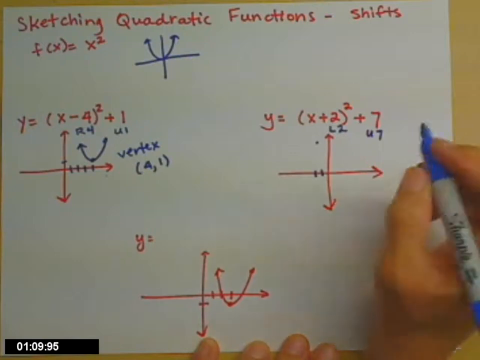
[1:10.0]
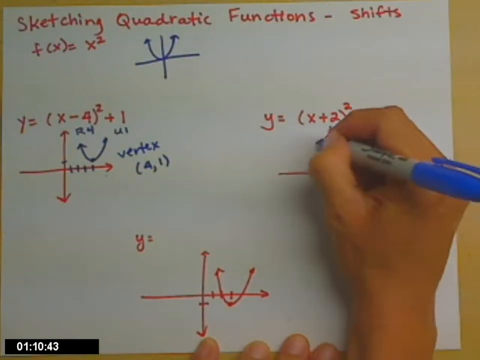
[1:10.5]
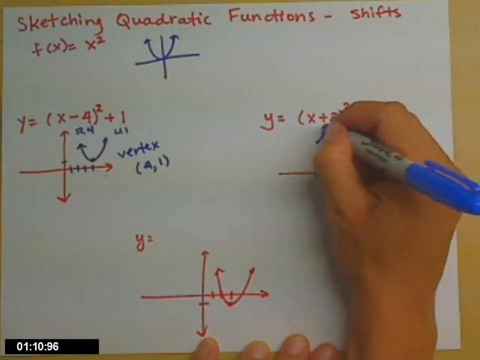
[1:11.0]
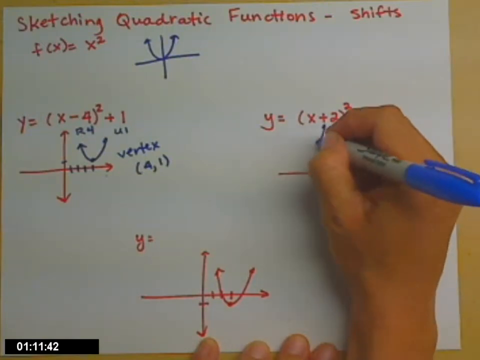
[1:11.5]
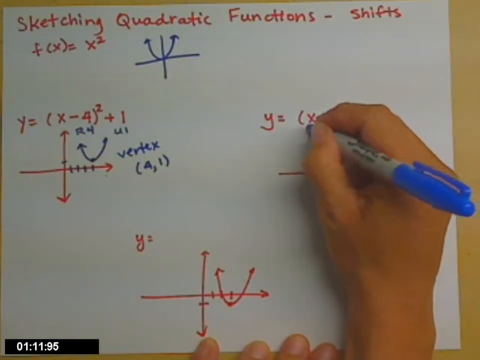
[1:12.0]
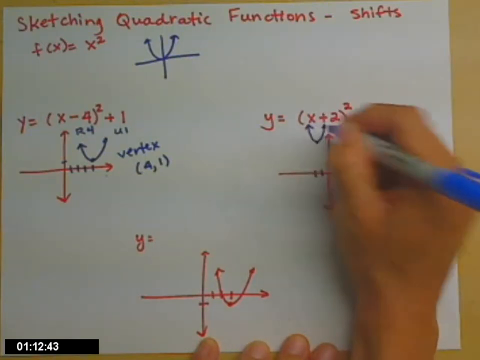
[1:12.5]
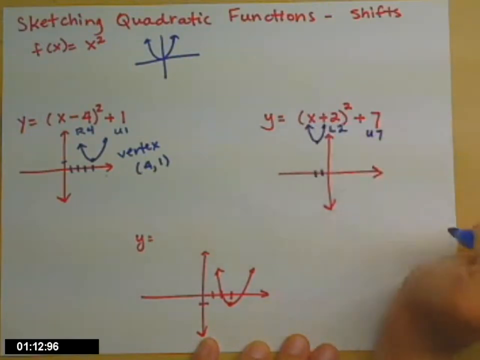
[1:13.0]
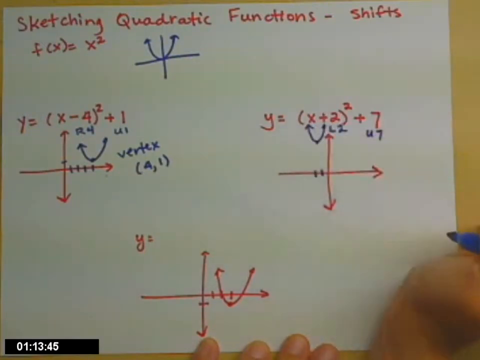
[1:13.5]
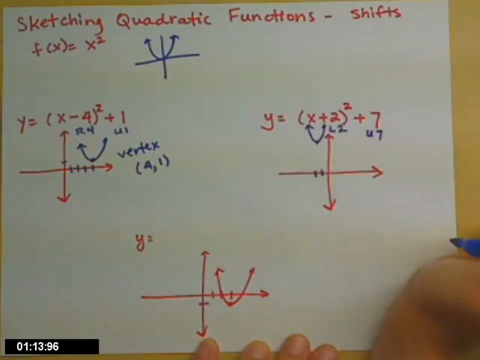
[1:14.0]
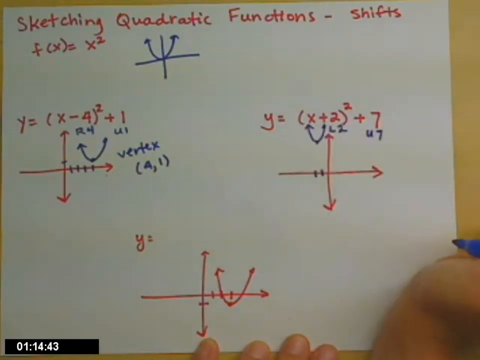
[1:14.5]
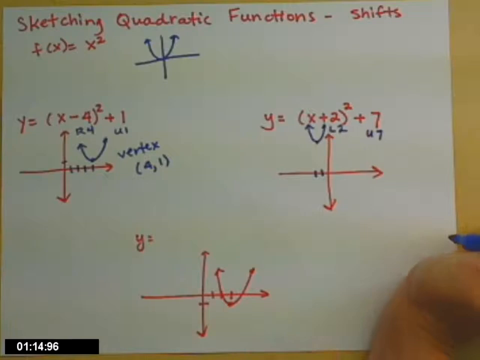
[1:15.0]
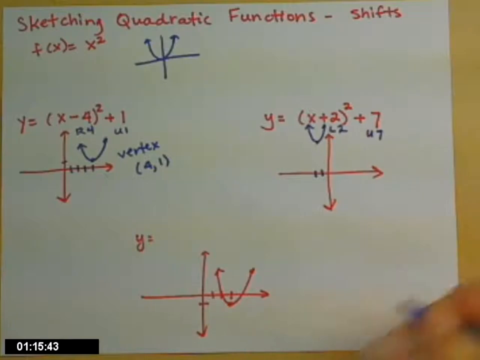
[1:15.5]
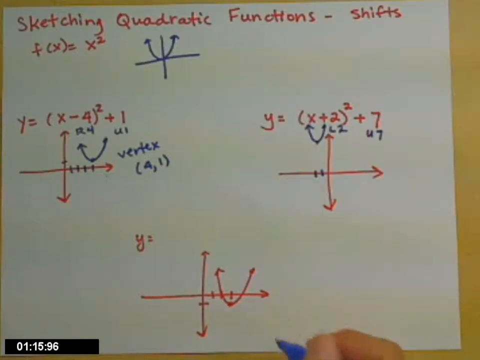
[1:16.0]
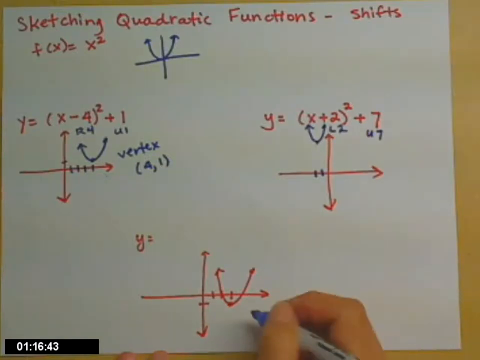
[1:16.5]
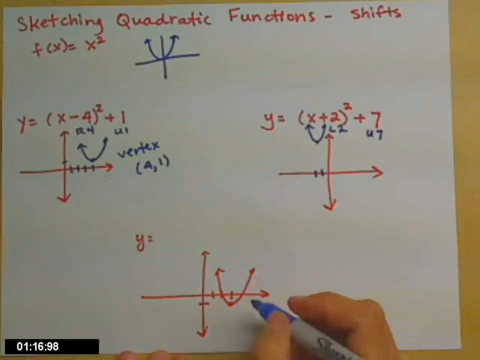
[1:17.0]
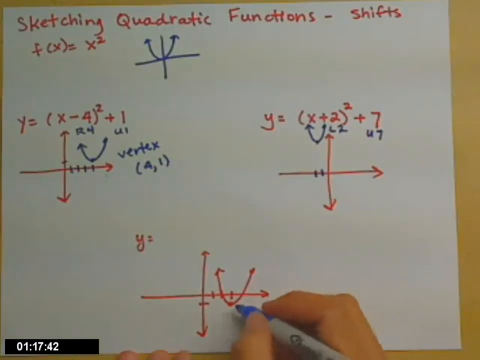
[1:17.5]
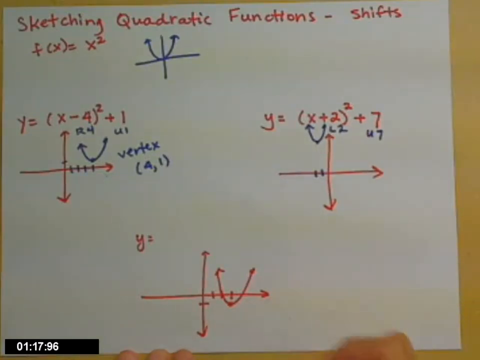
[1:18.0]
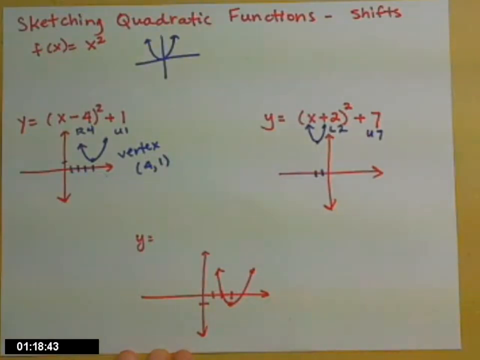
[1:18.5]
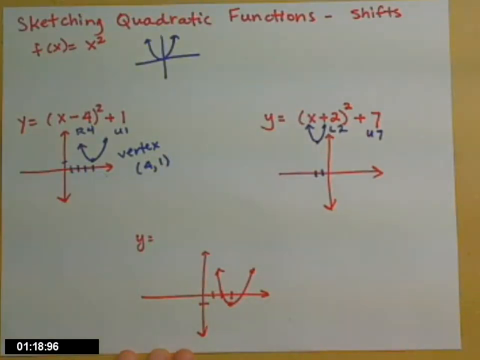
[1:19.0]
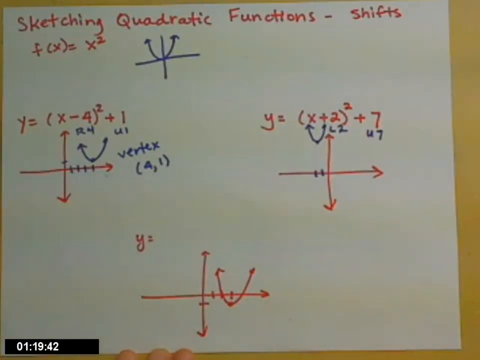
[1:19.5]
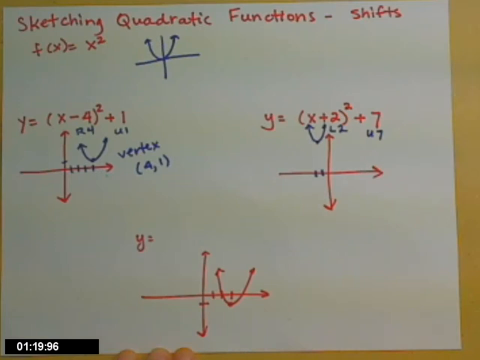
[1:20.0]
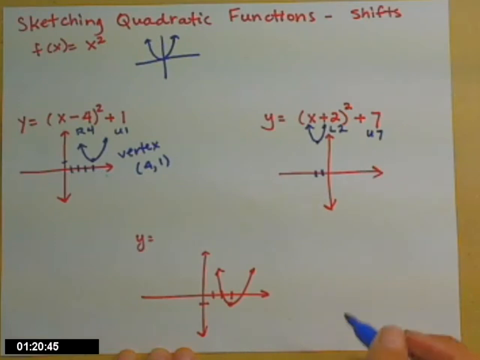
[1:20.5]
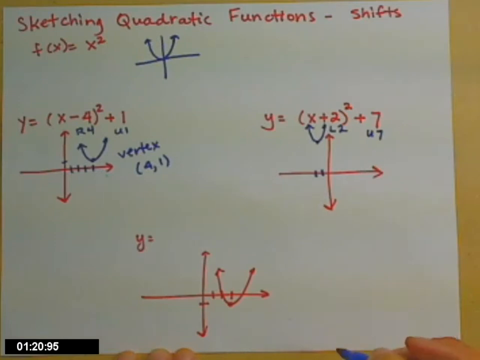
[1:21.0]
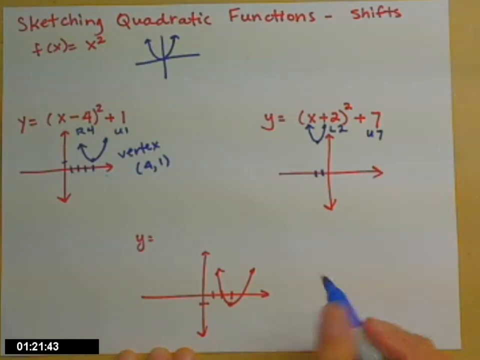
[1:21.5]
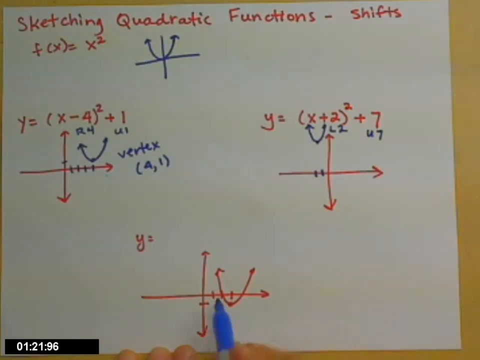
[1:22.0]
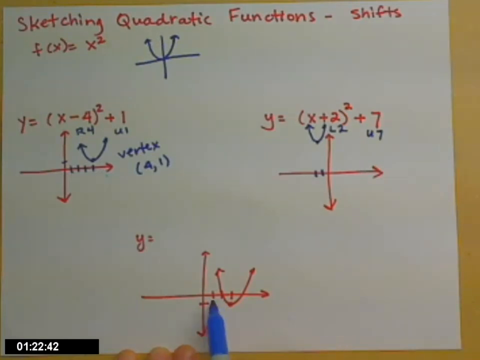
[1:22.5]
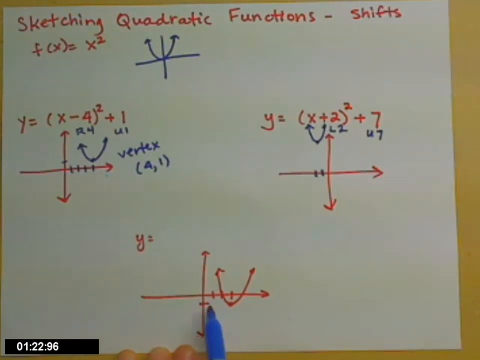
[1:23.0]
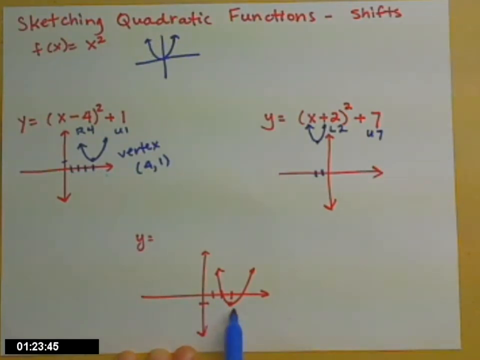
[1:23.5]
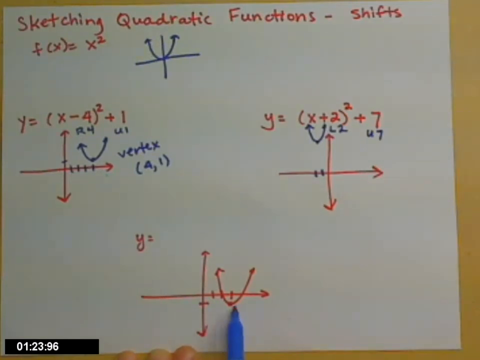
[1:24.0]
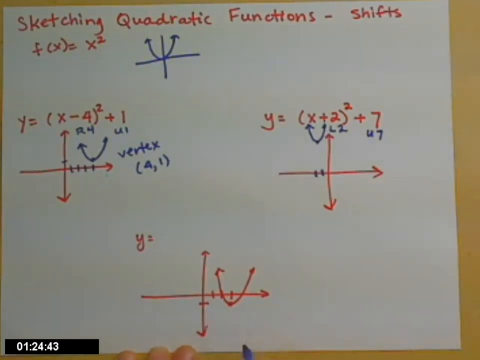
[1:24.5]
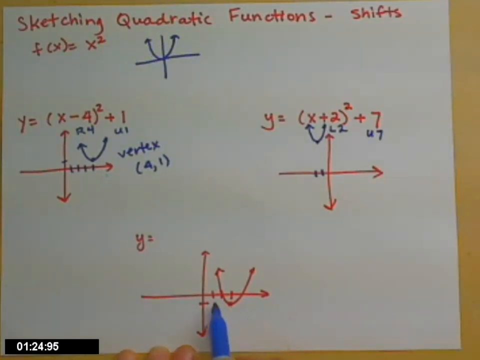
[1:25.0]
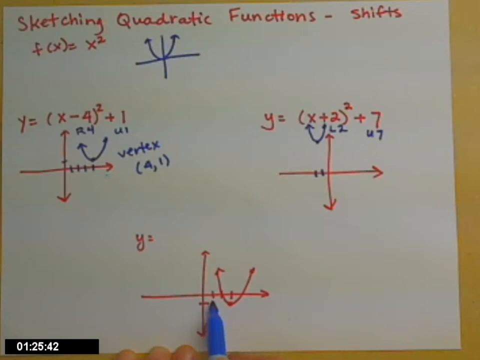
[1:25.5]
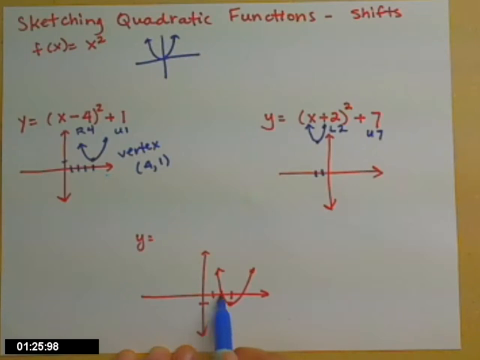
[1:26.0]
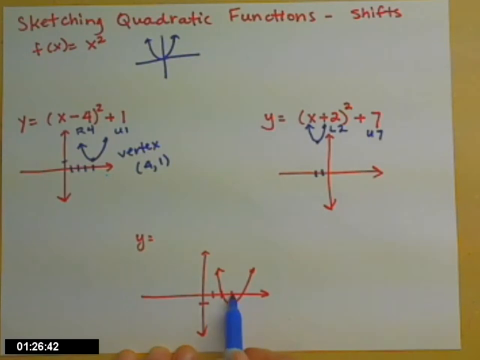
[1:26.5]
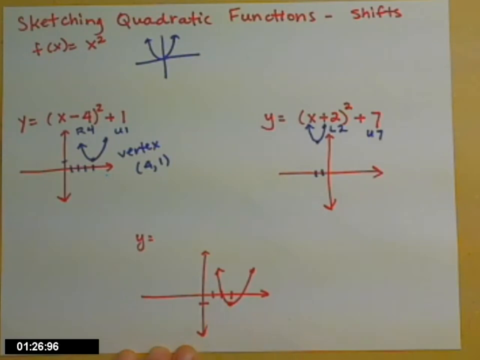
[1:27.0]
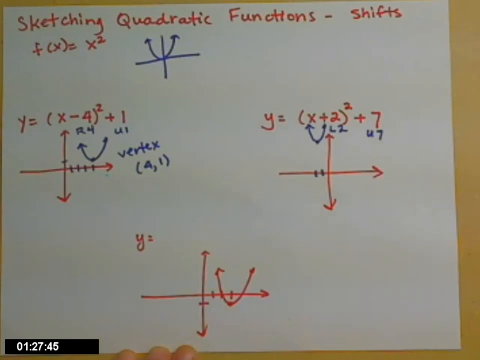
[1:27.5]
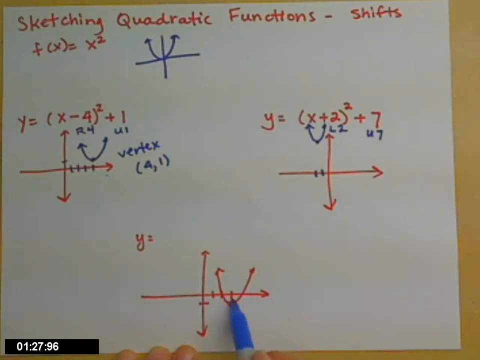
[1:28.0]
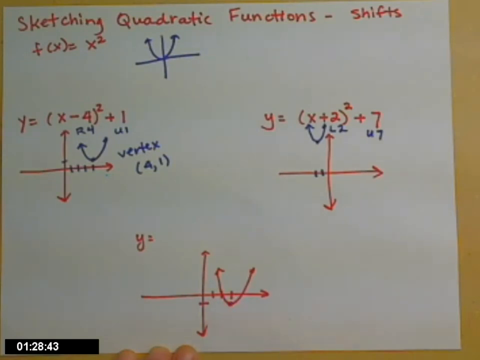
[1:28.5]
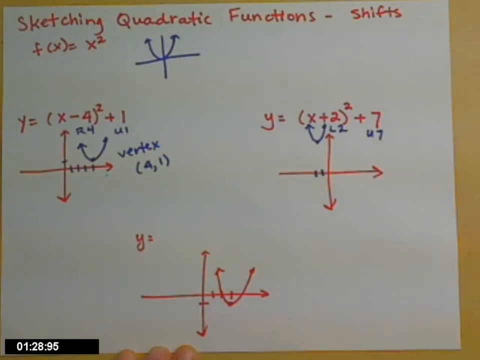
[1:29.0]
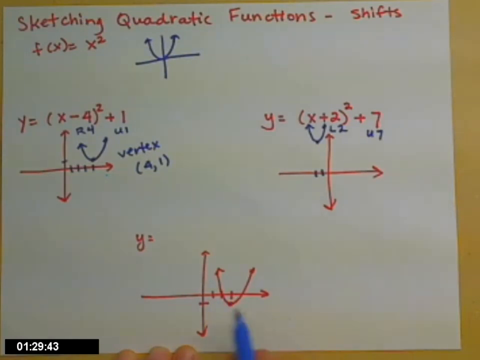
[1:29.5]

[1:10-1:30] The hand rises from the bottom right-hand corner of the screen and uses the pen to write a U shape underneath the line reading "(x + 2)", joining U-shape arrows at the top of each side, left and right. The hand disappears at the bottom of the screen and reappears at the centre of the bottom section, now working on the last sum at the bottom of the screen. They hover the pen around and point to the horizontal arrow on the right-hand side, wiggle the pen around and point to the vertical lines, then raise their hand toward the second sum on the right-hand side of the page and hover the pen over that section.